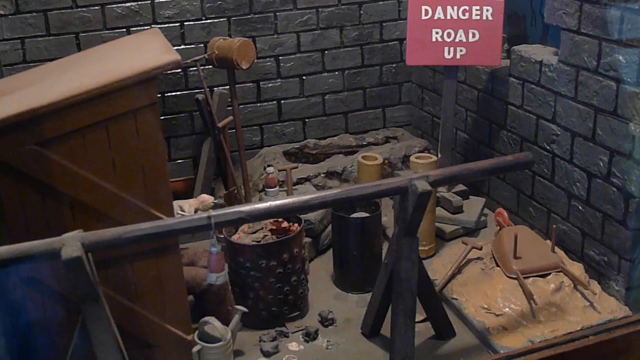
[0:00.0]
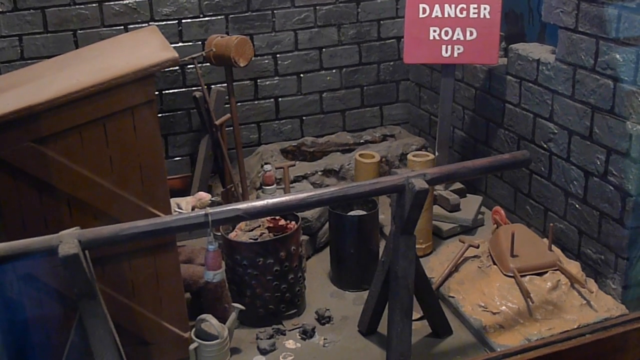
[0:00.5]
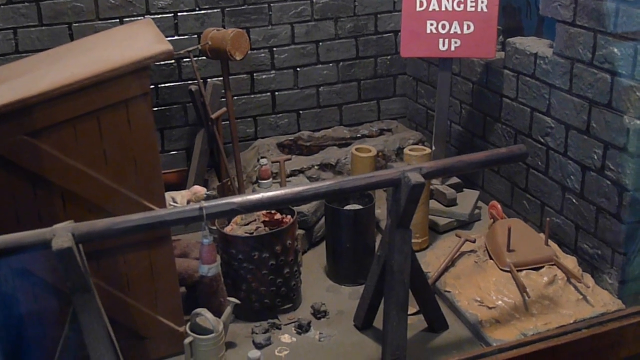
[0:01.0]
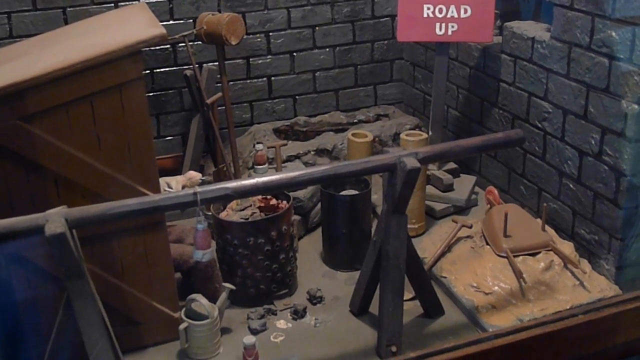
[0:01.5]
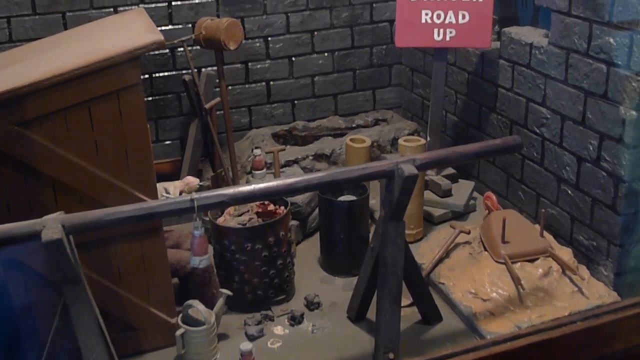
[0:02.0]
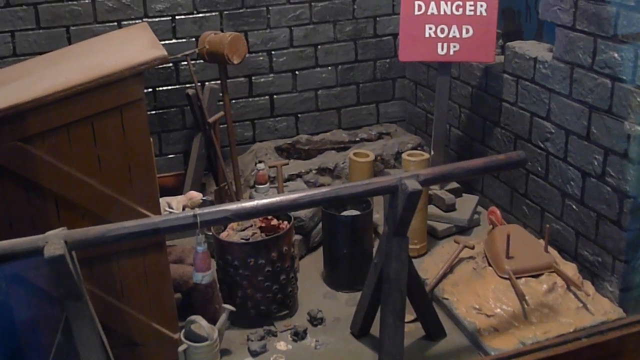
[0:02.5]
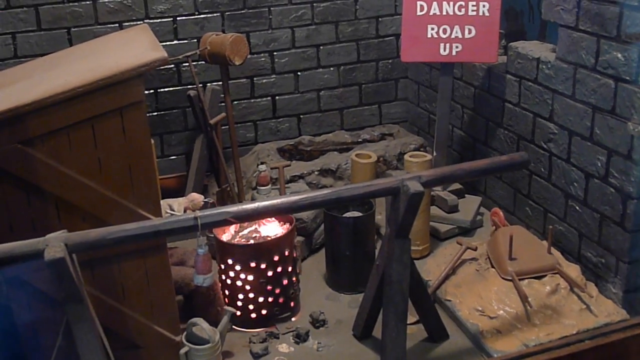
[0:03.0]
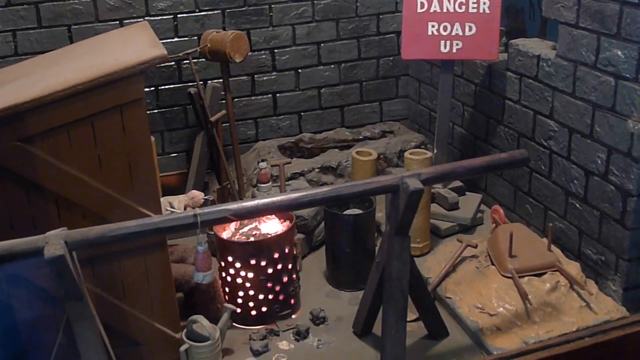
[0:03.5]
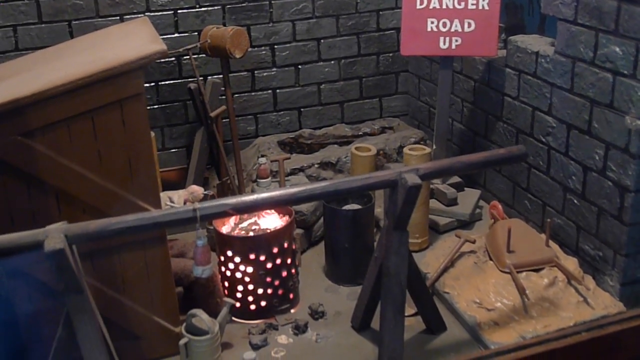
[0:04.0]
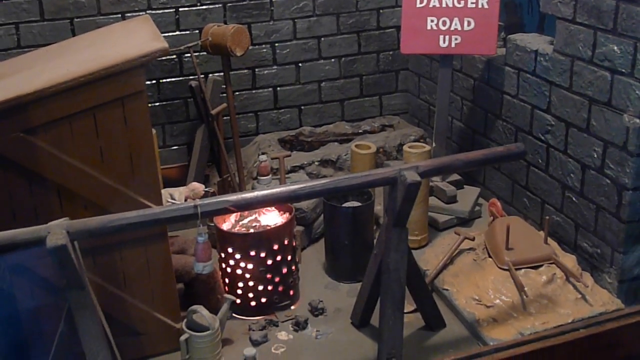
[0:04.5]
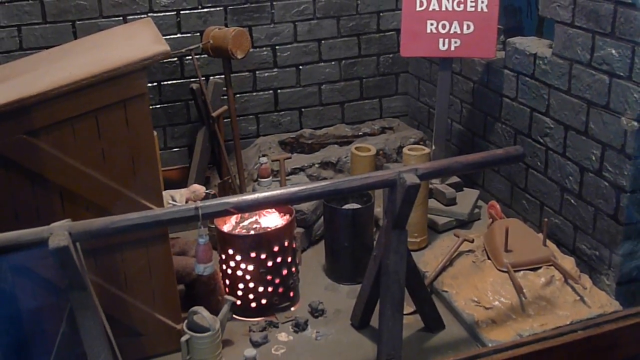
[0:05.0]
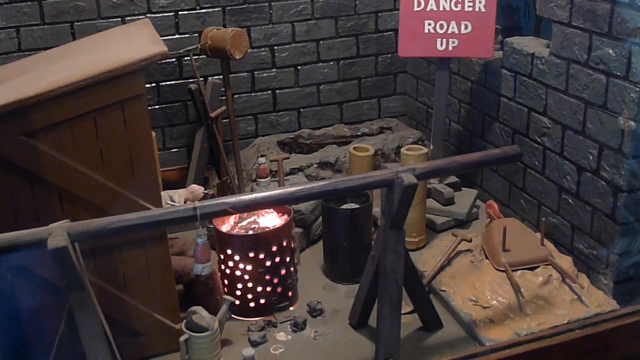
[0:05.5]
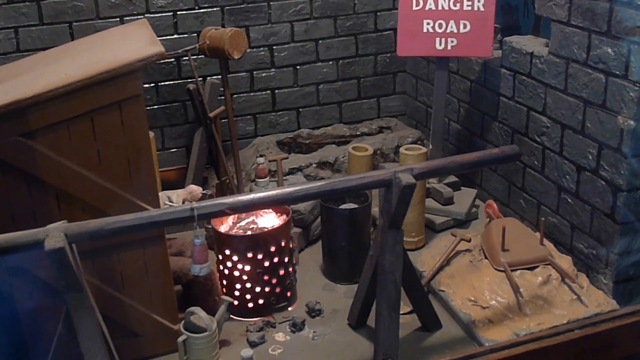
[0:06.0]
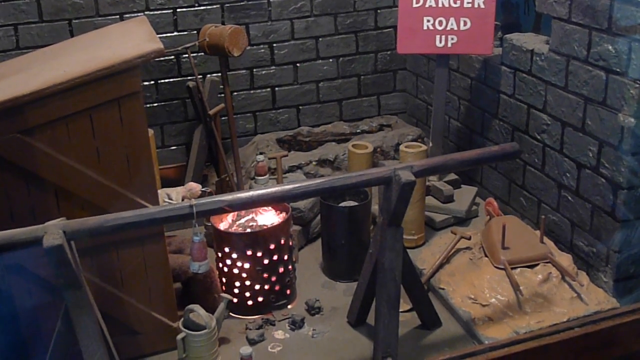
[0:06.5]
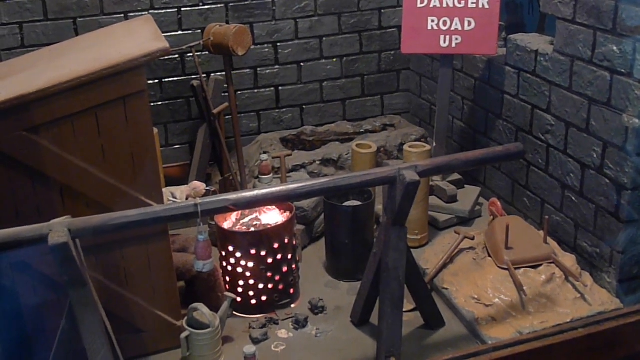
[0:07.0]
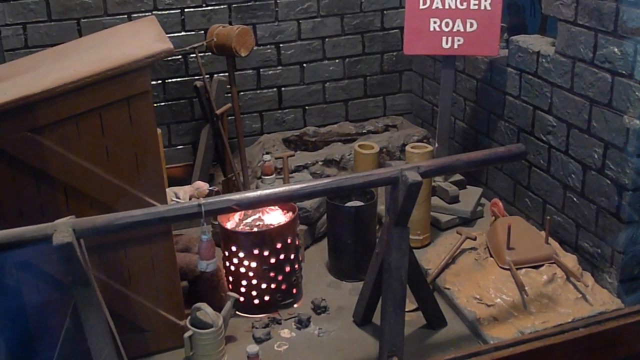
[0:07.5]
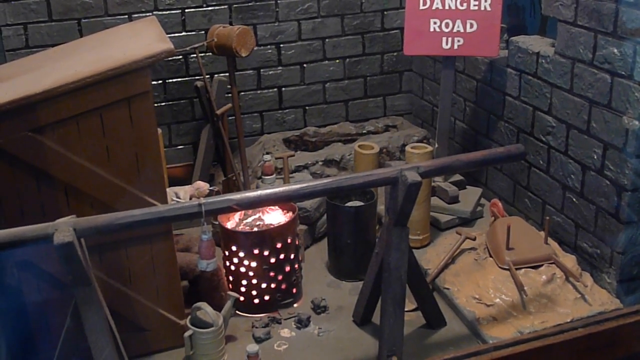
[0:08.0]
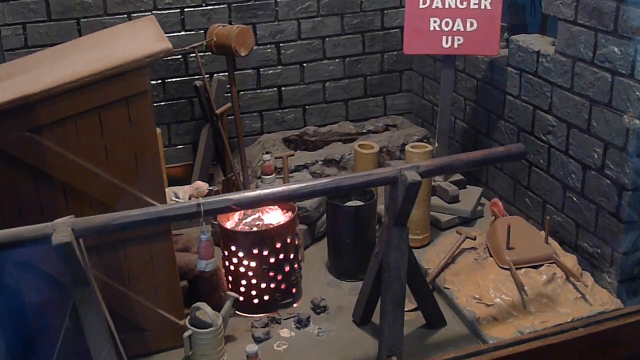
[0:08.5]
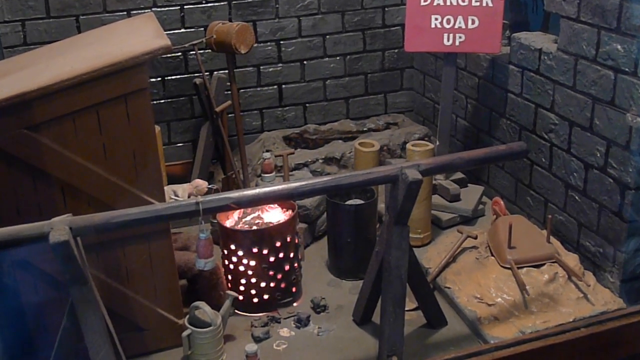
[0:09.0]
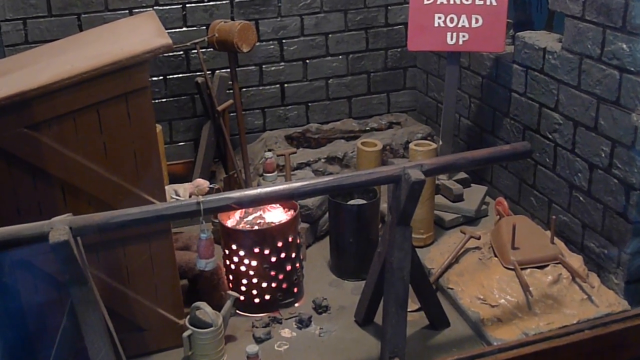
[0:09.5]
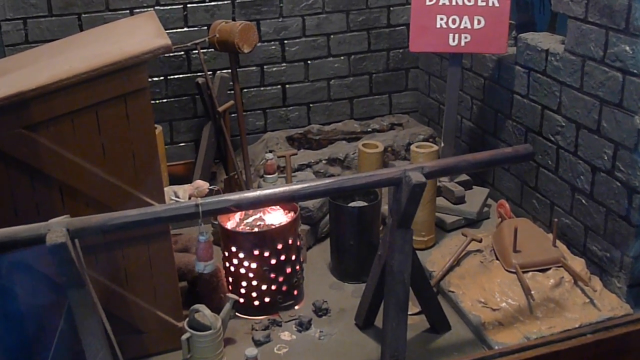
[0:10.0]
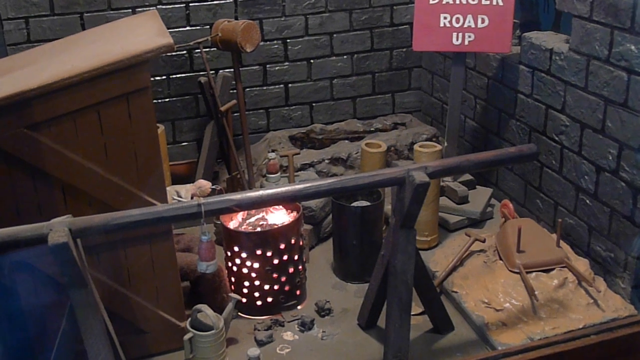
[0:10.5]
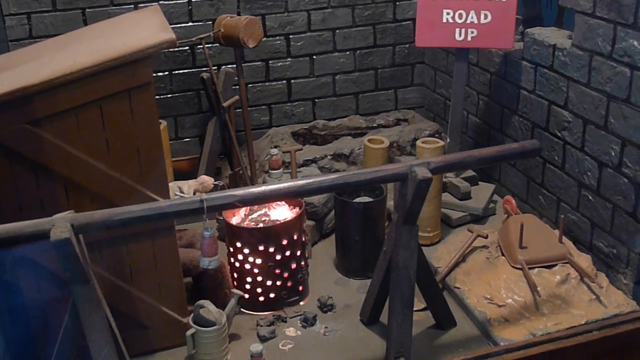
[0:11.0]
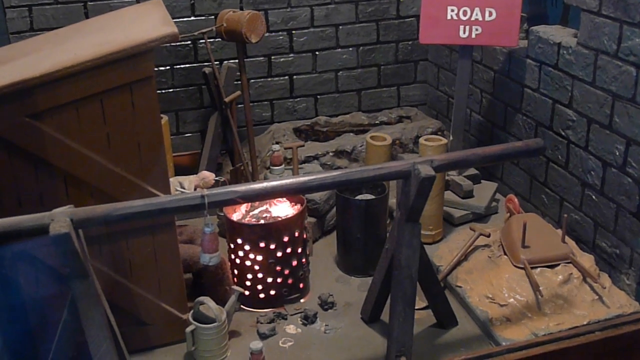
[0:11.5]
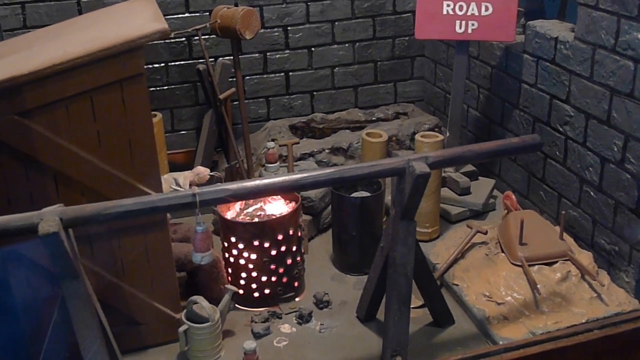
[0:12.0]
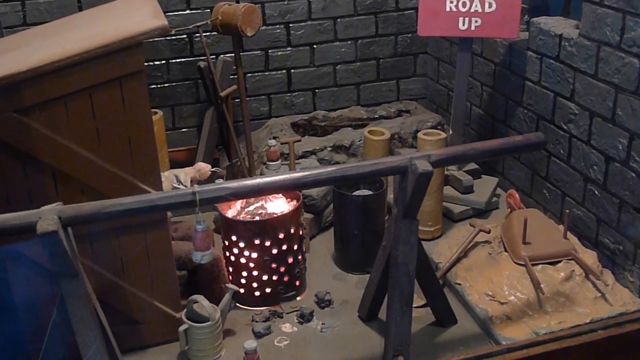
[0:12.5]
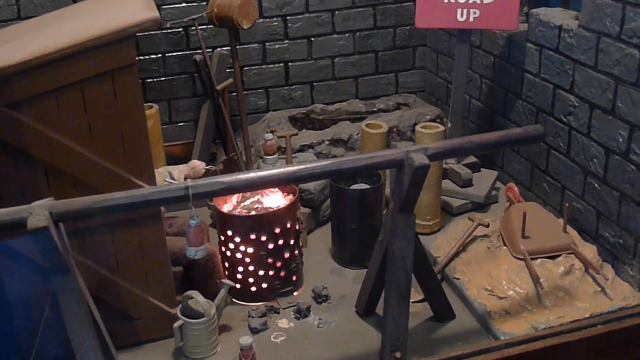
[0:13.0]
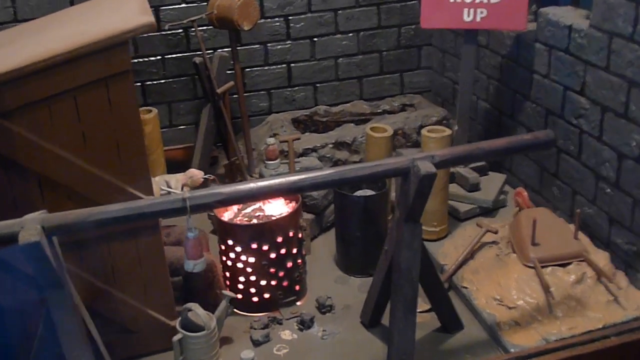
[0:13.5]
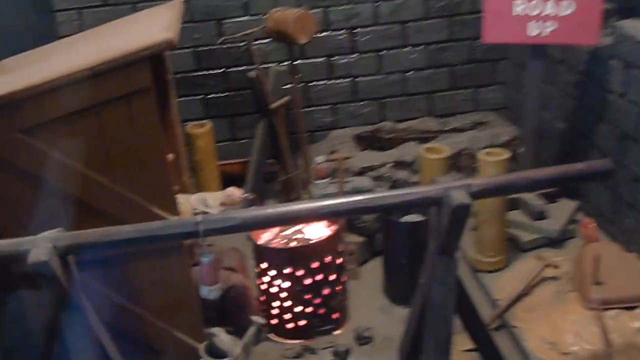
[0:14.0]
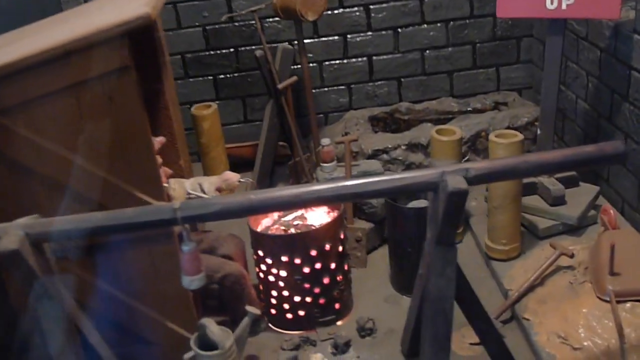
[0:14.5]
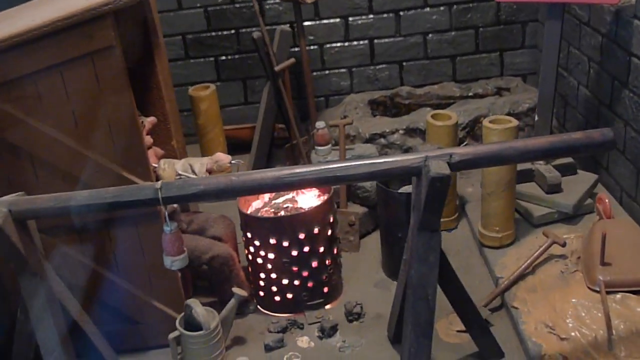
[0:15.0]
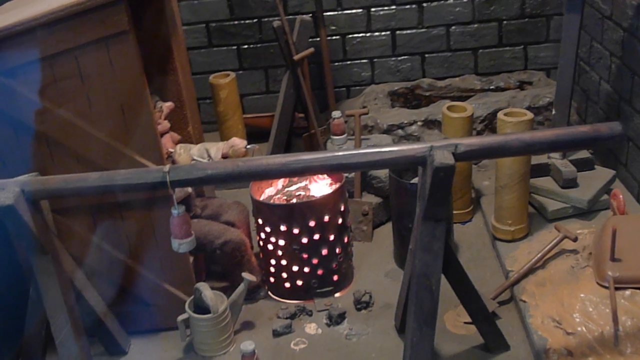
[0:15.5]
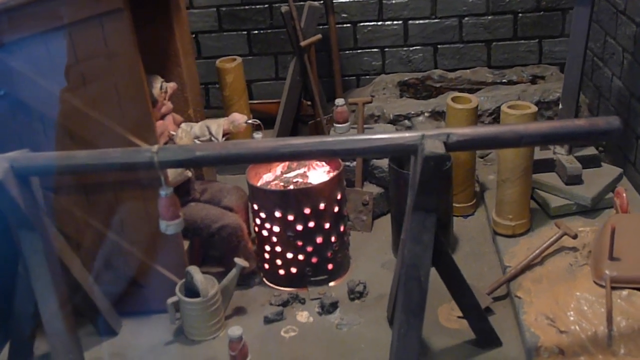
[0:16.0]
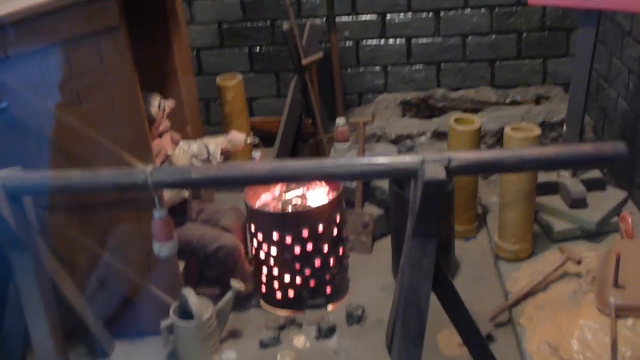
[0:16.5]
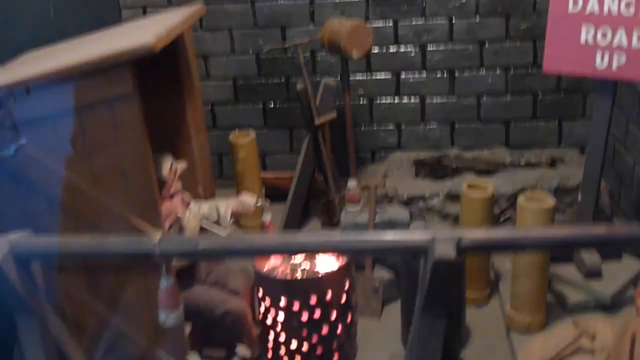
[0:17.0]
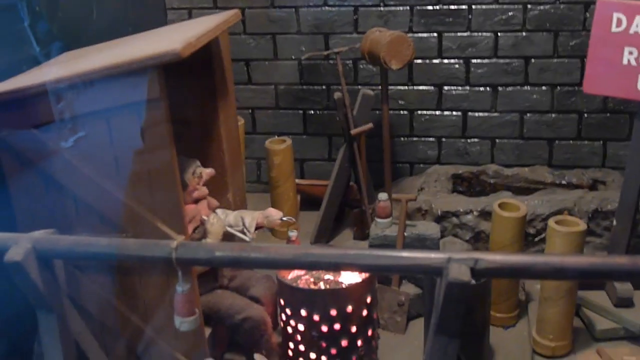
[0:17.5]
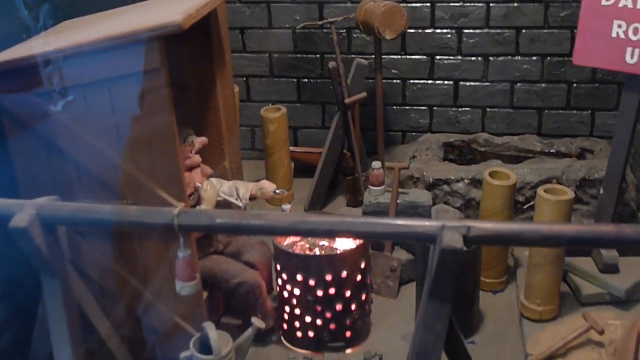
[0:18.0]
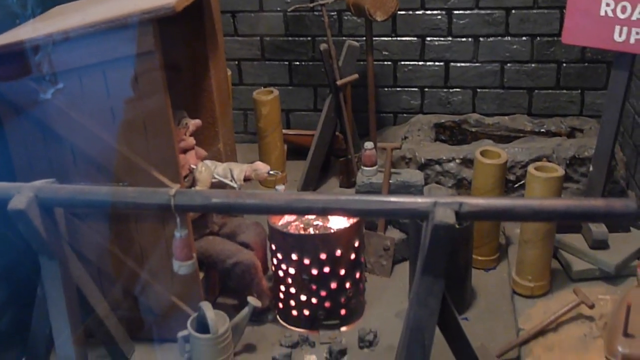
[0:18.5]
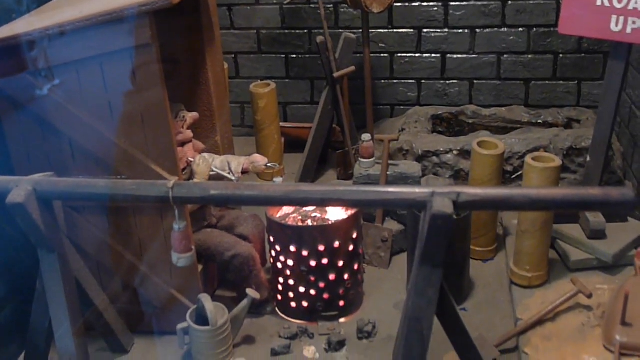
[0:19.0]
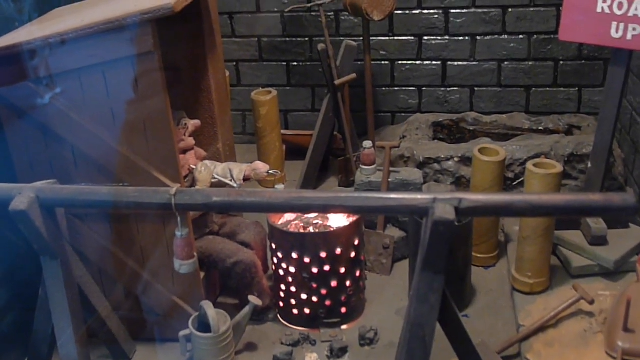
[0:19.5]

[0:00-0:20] What is possibly a museum exhibit is seen behind glass, with reflections on it. The exhibit looks to be a gray brick wall with assorted tools in a mishmash around it. There is a wooden shack on the left. A red sign has white text reading "Danger Road Up"; the sign is cut off, so other text above it cannot be read. Other items are scattered here and there: a wheelbarrow turned upside down, possibly shells, and a fire circle, which looks like a circle of metal with wood in the middle that can be burned safely. There also looks to be a mallet and possibly a shovel. The scene may depict a miner or some other kind of workman inside a house or building, maybe working on excavation or construction.